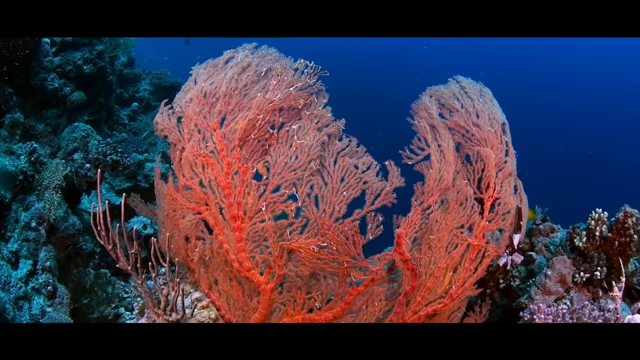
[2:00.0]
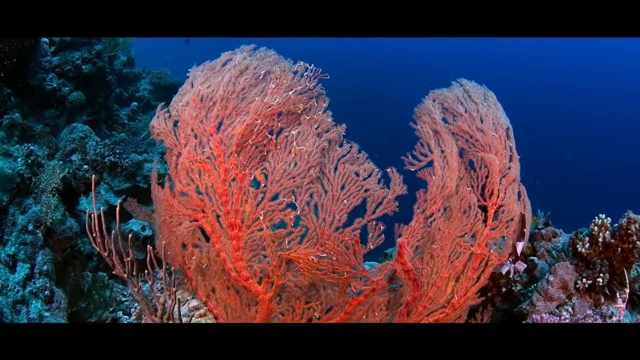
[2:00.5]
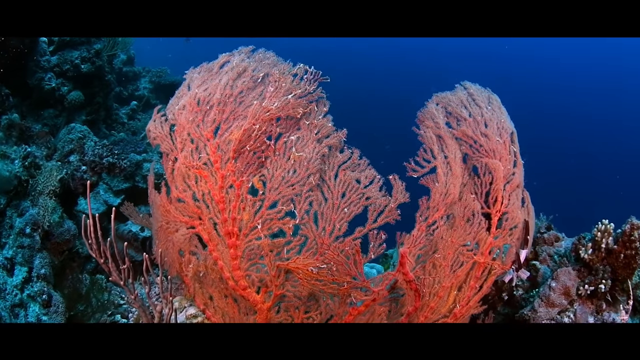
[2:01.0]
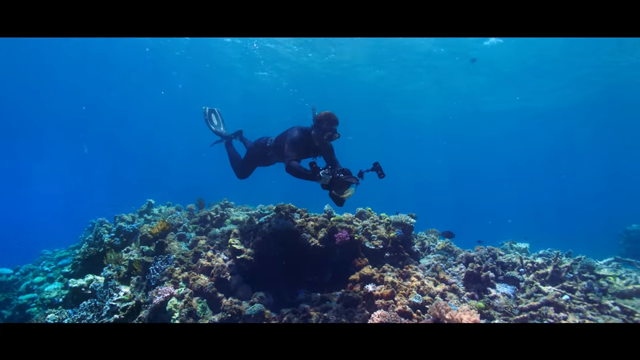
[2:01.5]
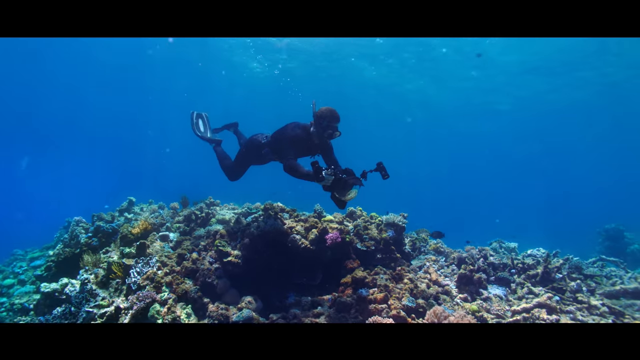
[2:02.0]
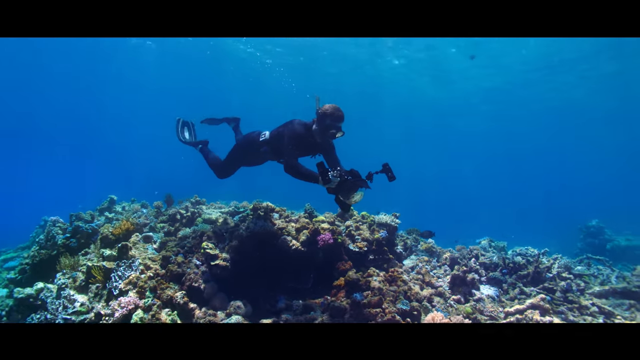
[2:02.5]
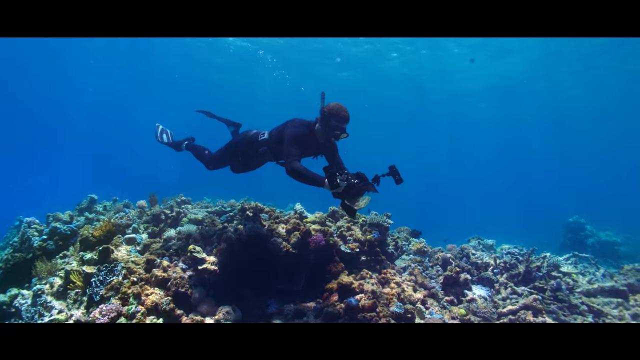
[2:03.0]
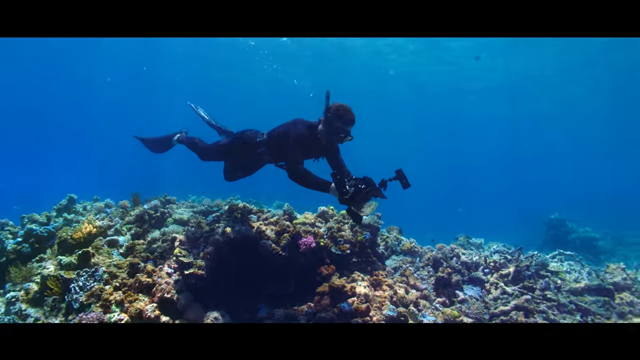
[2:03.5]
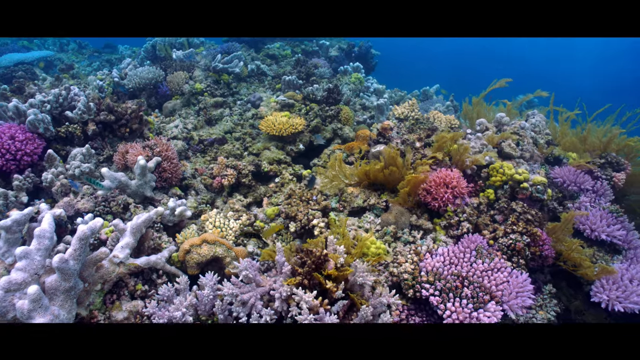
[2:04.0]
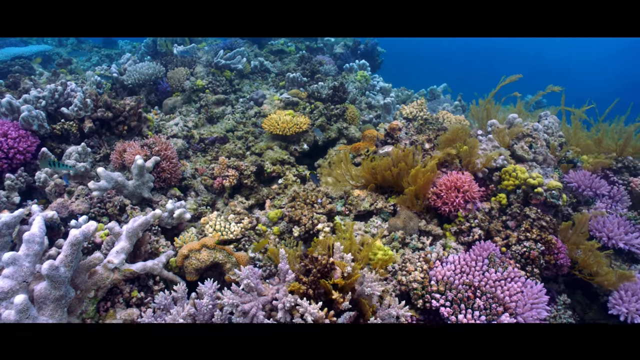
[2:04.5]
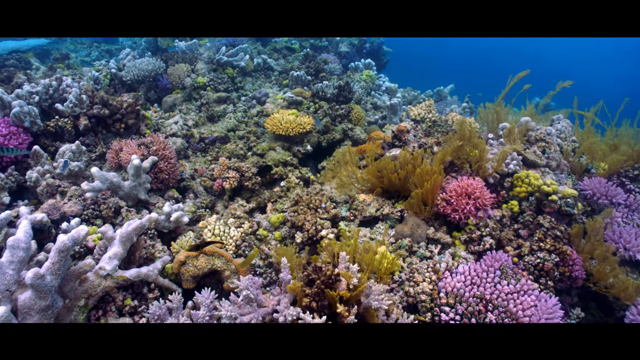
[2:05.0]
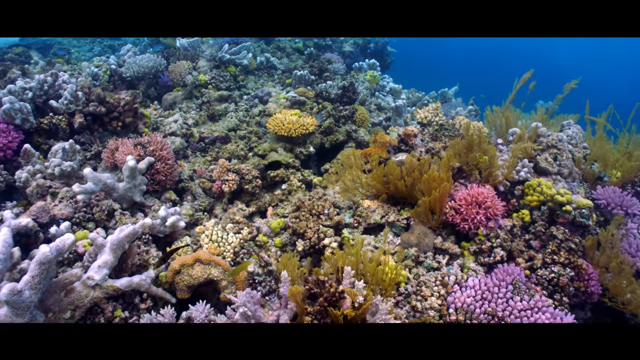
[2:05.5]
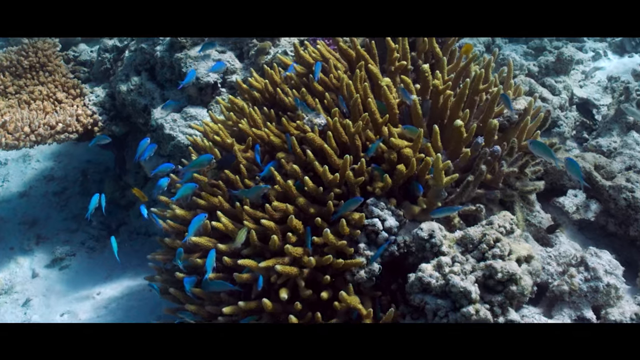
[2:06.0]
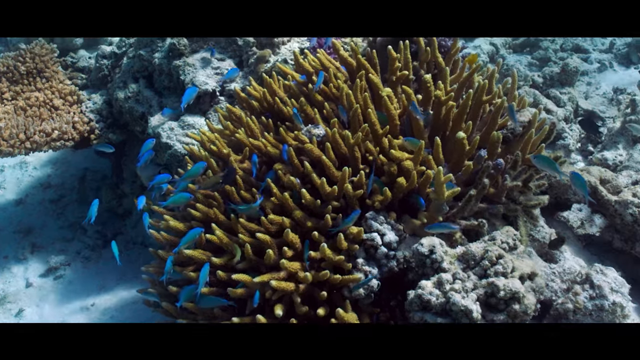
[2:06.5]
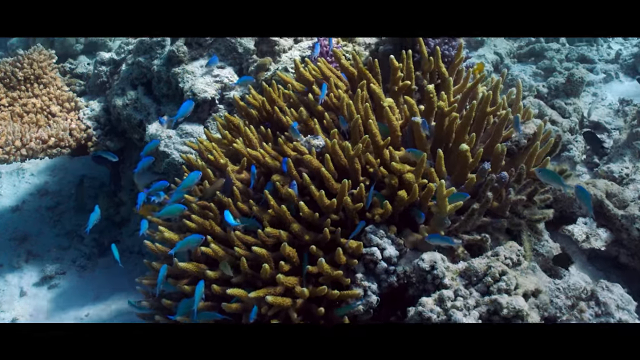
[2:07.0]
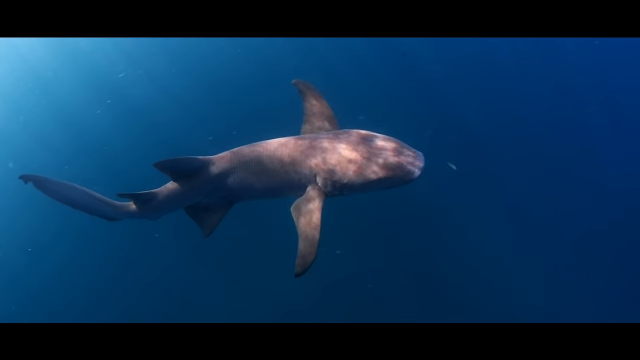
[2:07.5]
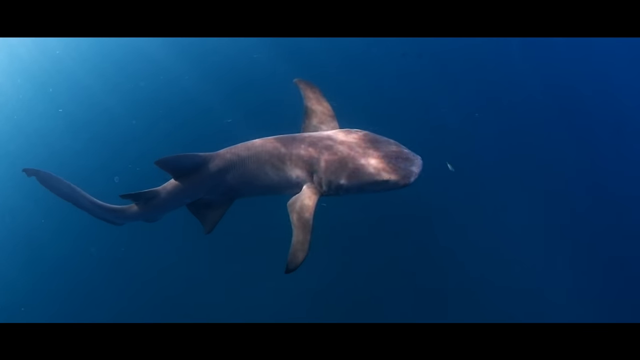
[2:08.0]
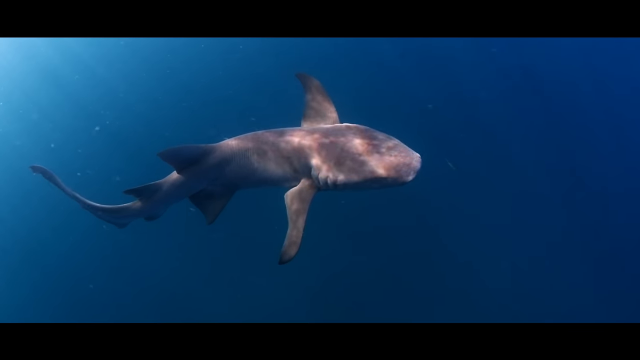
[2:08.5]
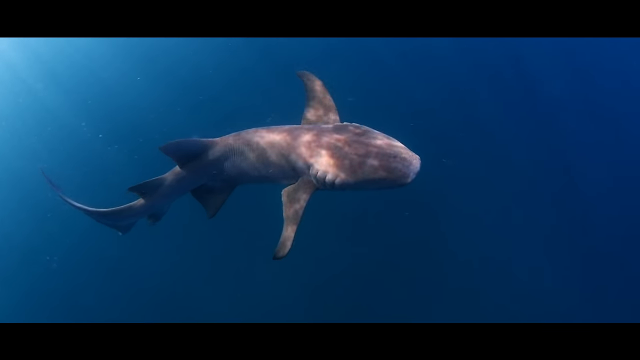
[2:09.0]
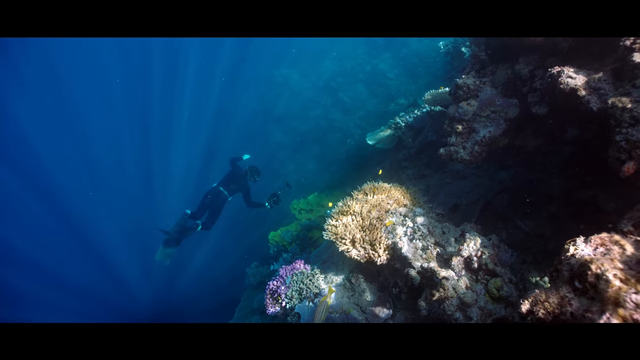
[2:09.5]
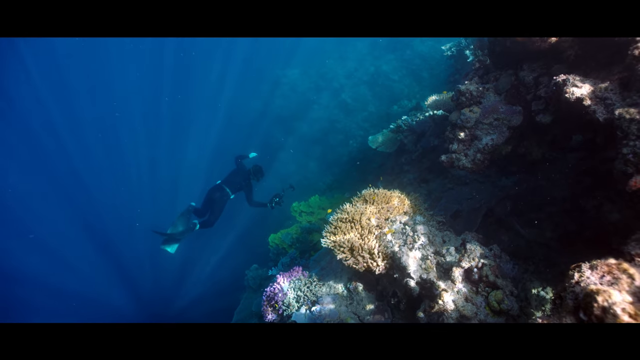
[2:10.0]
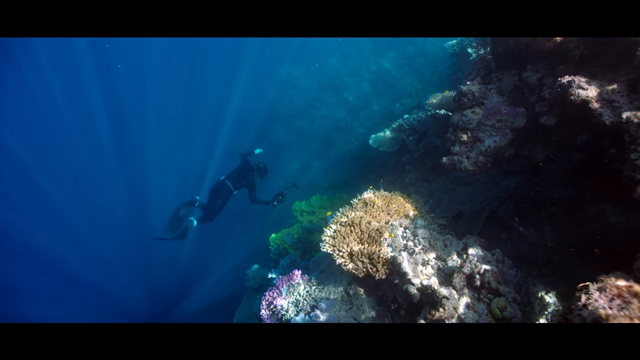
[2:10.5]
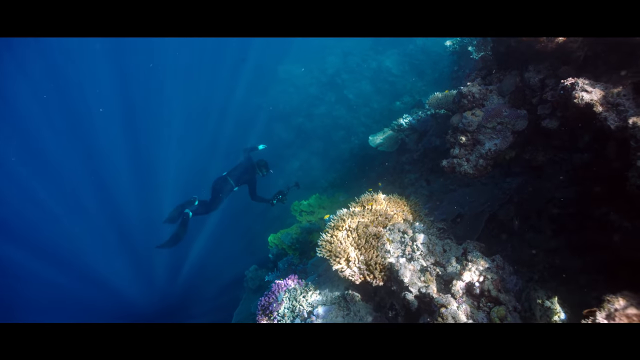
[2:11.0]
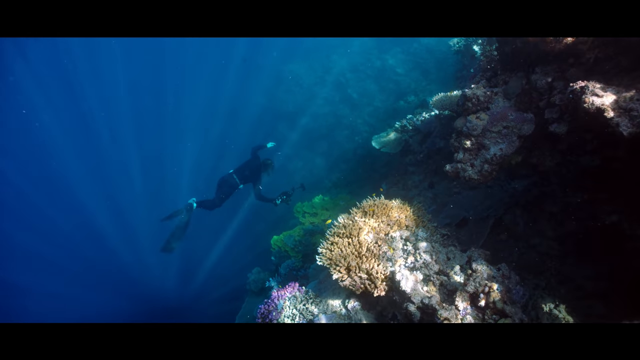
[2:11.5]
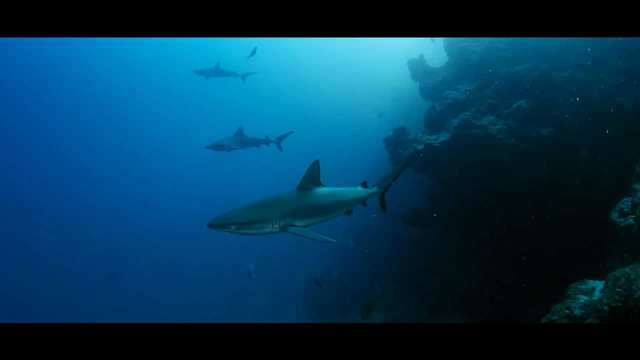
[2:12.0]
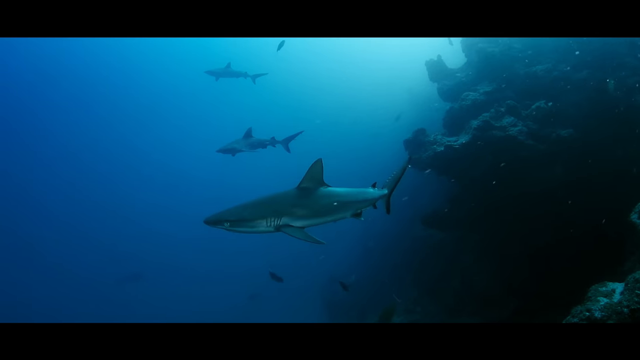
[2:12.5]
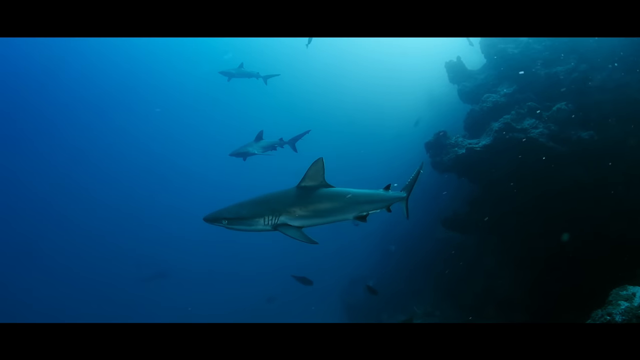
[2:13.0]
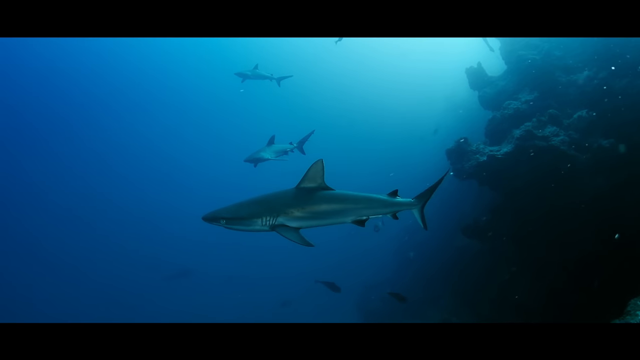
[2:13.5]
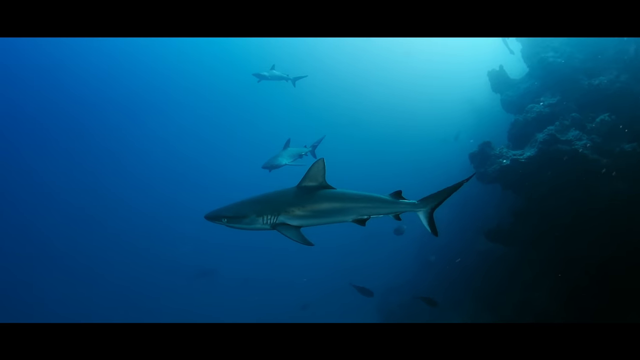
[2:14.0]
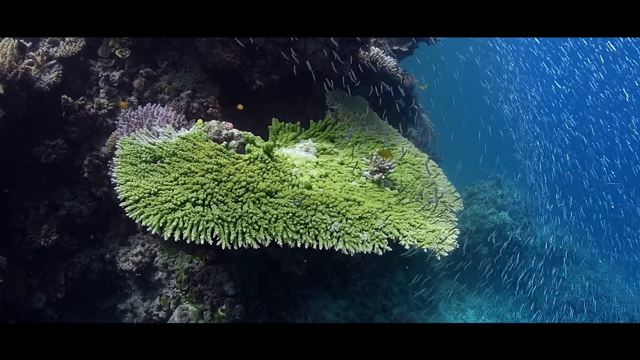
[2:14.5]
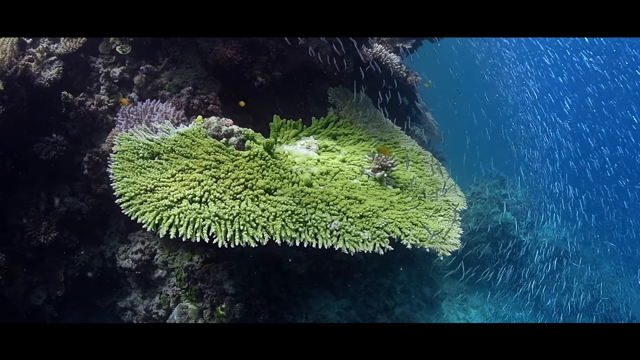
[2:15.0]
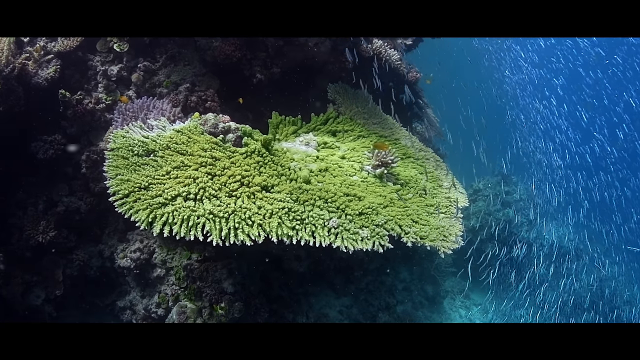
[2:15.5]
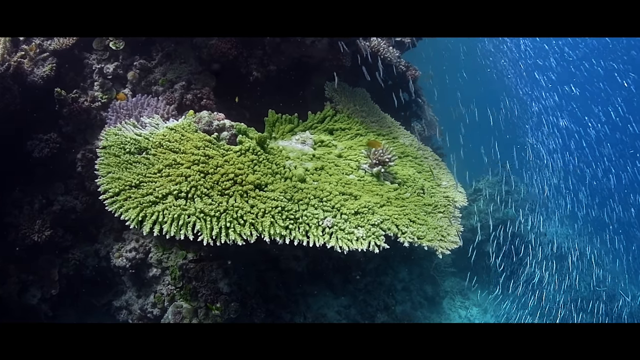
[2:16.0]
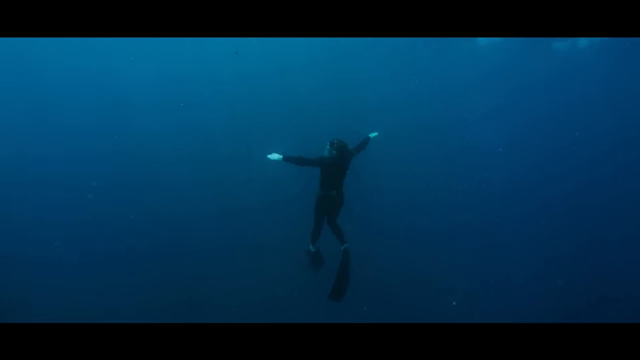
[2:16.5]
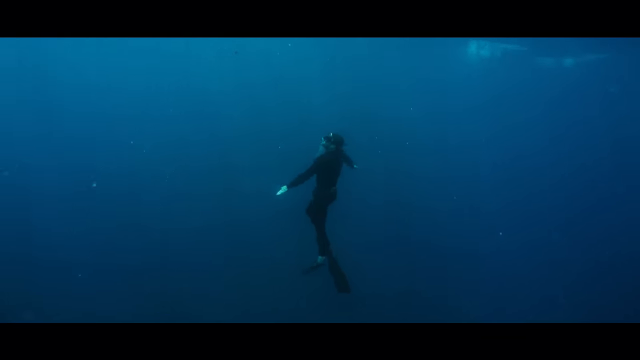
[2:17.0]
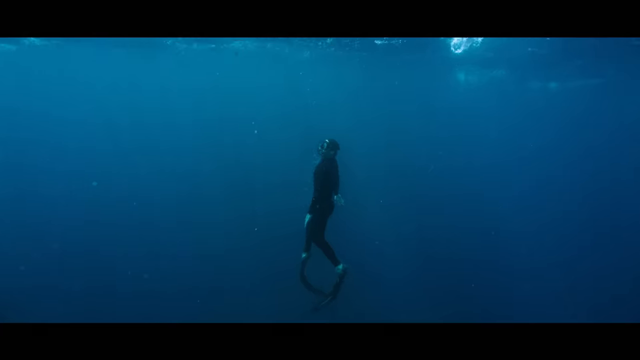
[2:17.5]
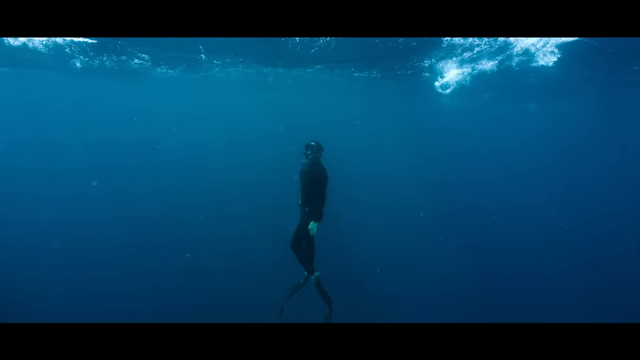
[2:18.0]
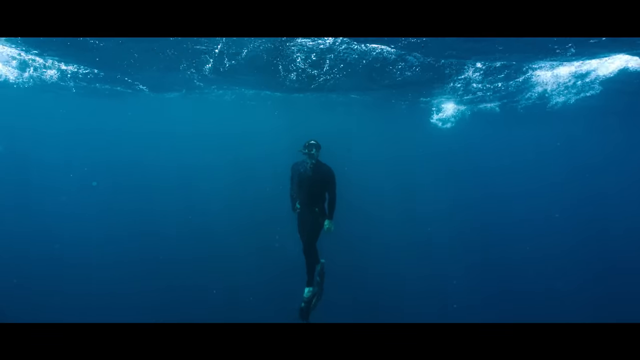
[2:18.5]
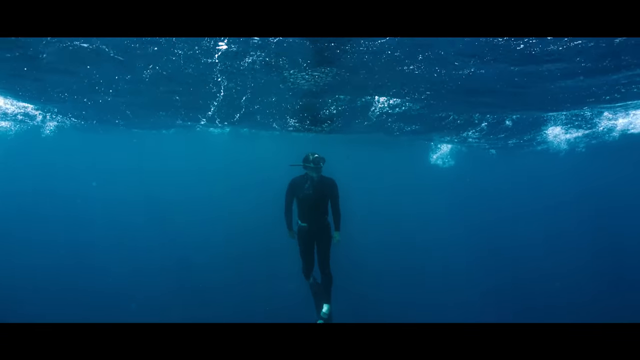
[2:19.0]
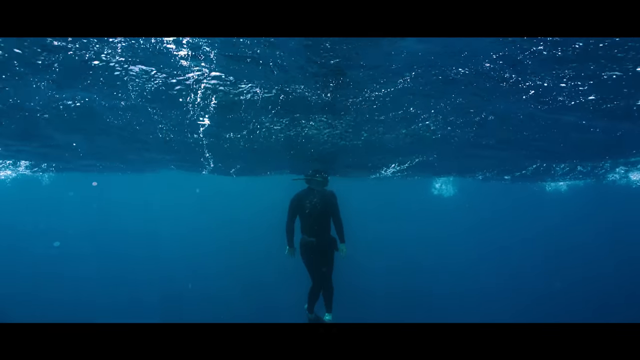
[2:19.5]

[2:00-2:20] A large orange feathery coral is on a reef, with a snorkeler skimming over the reef, swimming around carrying a camera and filming. There are many tiny fish, and schools of them swarm all around the reef. A large gray shark swims over, and approximately three black-tipped reef sharks are just off the edge of the reef. The water is a deep dark aqua blue, clear with not much clouding. There is an abundance of life on the reef in pinks, yellows, purples, blues and greens. The fish don't seem bothered by the divers, who wear full diving suits with long flippers and carry cameras, filming. The sharks don't seem overly interested in the divers. One of the divers swims vertically to the top of the water to break the surface.